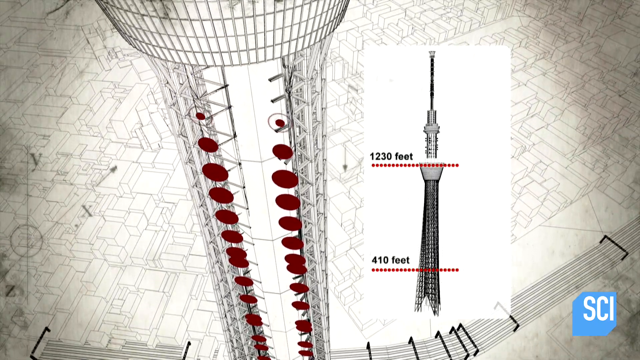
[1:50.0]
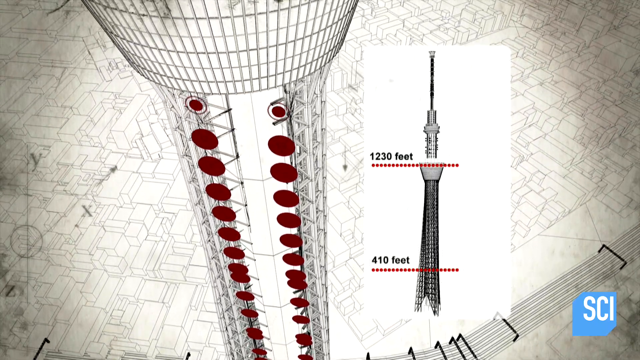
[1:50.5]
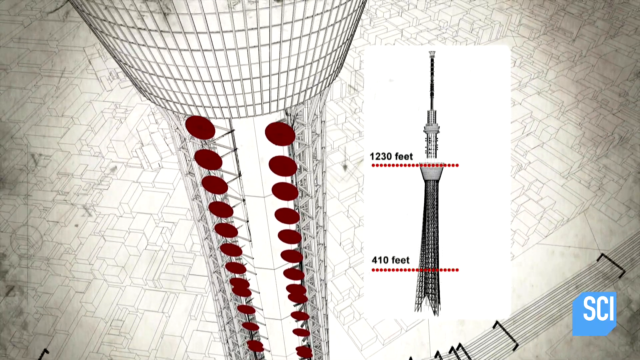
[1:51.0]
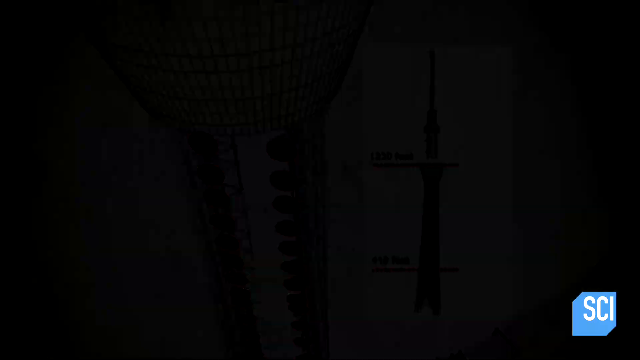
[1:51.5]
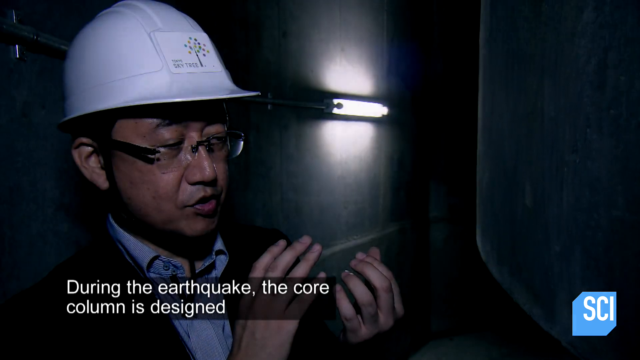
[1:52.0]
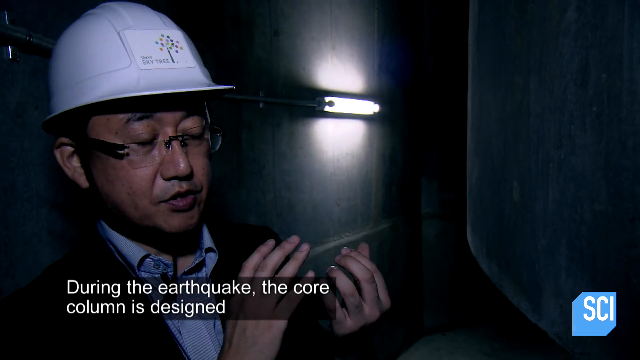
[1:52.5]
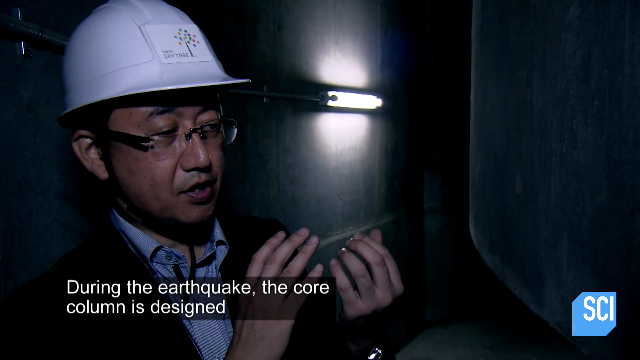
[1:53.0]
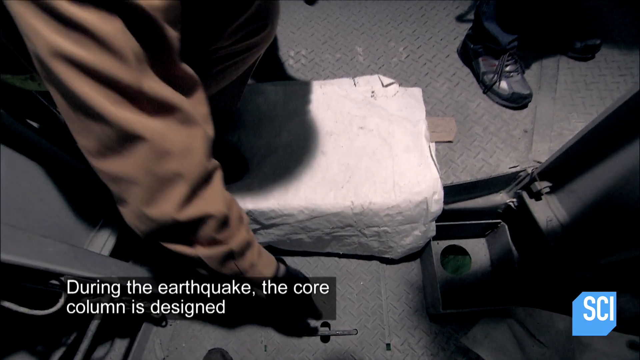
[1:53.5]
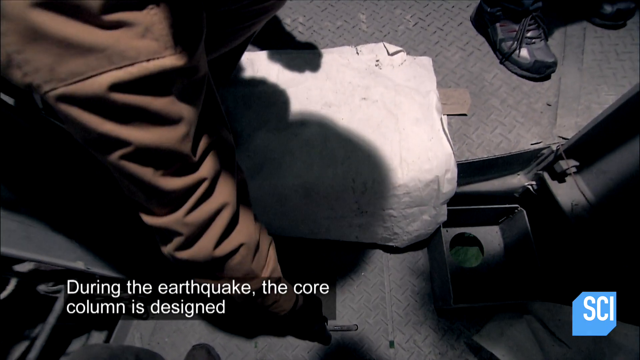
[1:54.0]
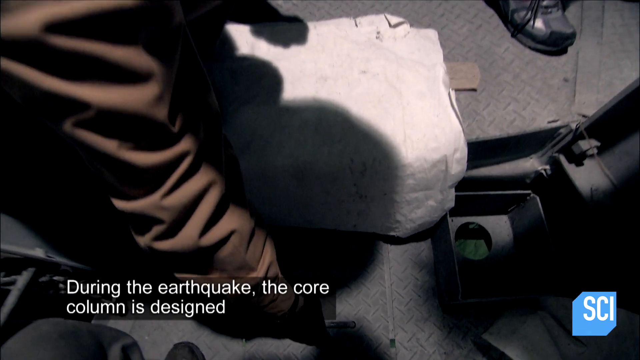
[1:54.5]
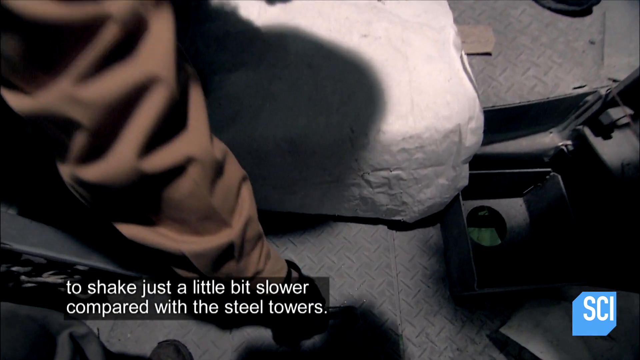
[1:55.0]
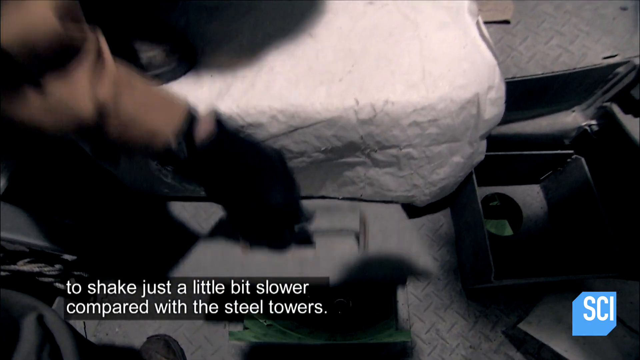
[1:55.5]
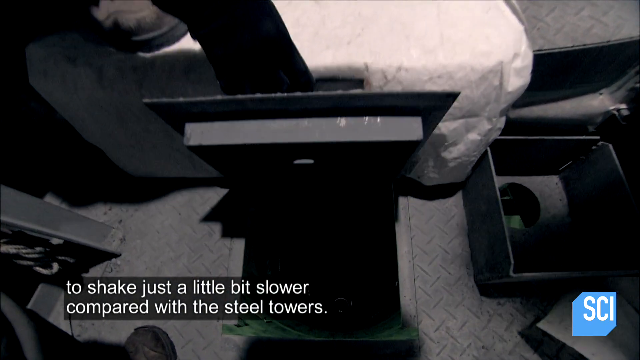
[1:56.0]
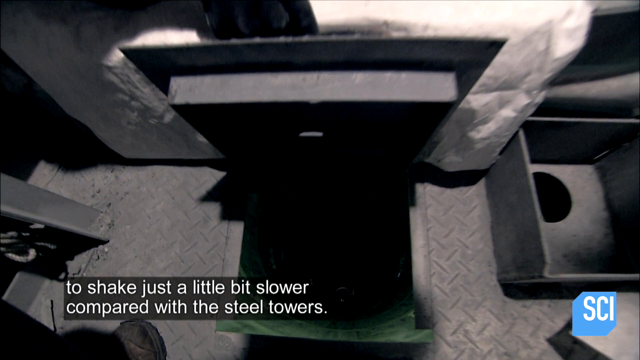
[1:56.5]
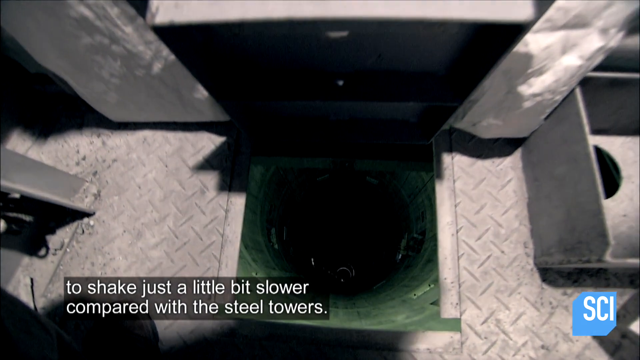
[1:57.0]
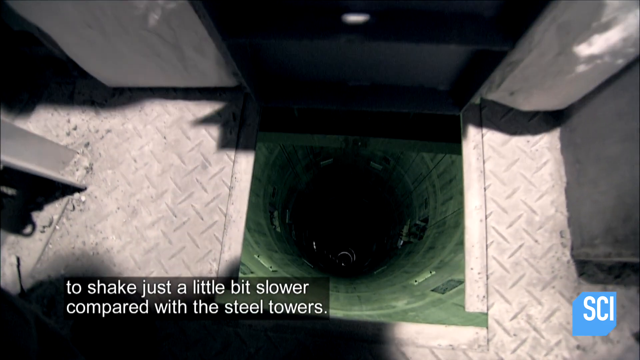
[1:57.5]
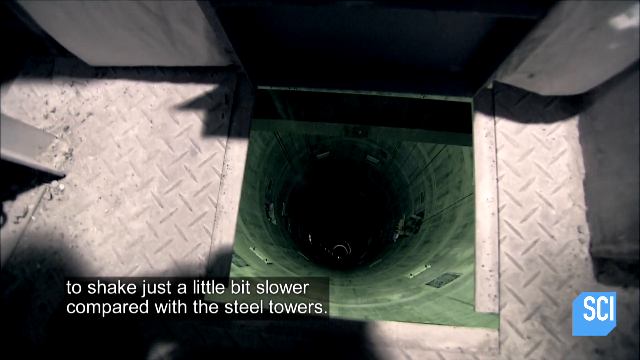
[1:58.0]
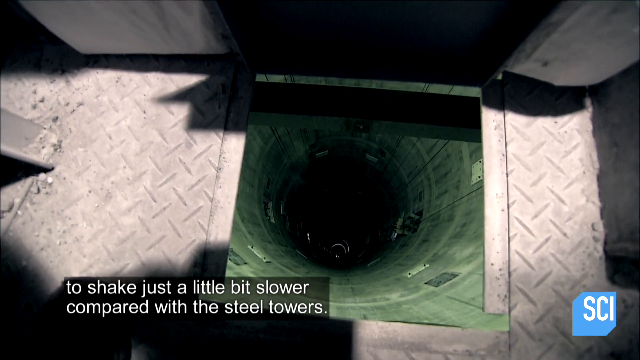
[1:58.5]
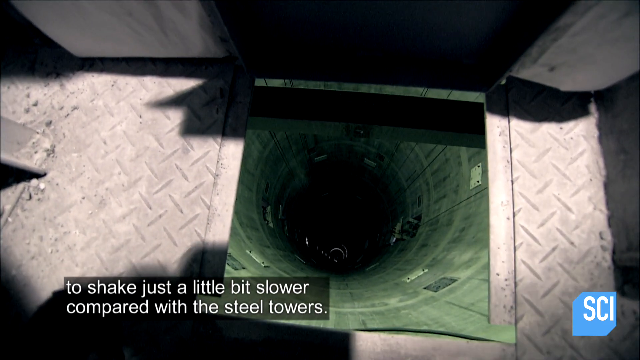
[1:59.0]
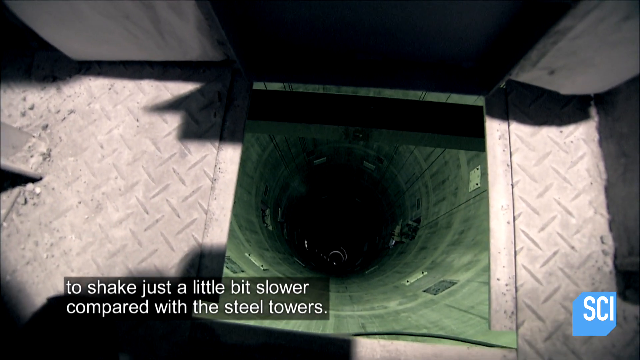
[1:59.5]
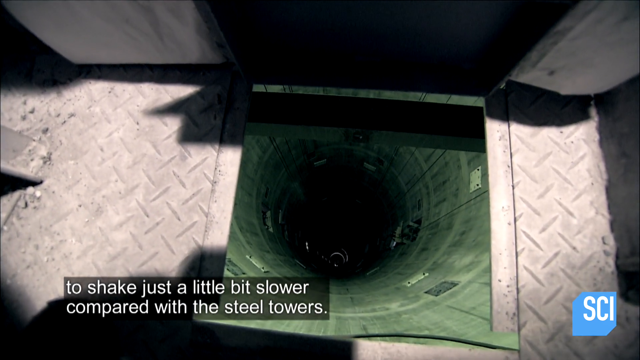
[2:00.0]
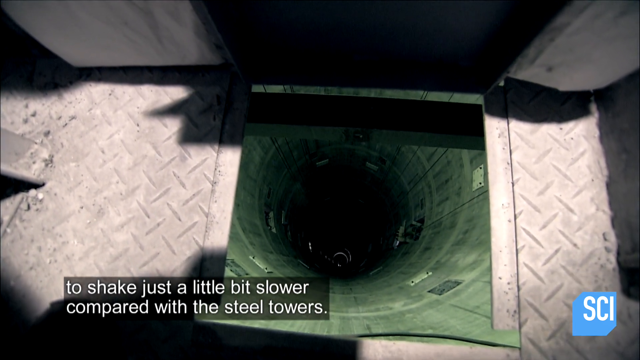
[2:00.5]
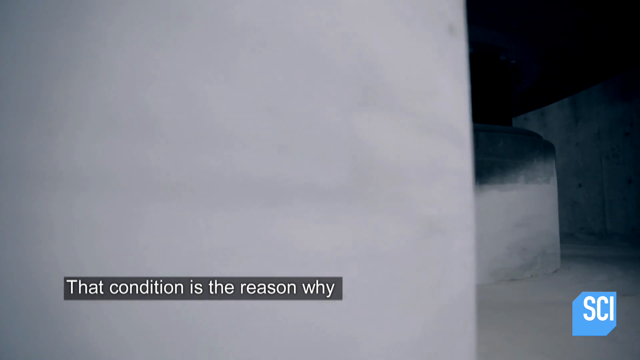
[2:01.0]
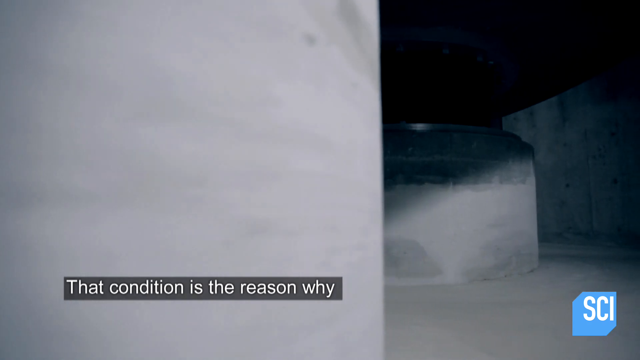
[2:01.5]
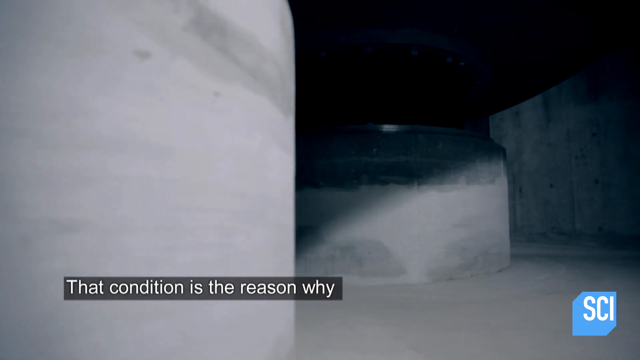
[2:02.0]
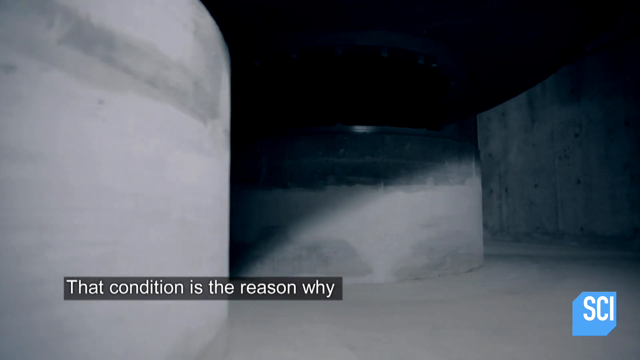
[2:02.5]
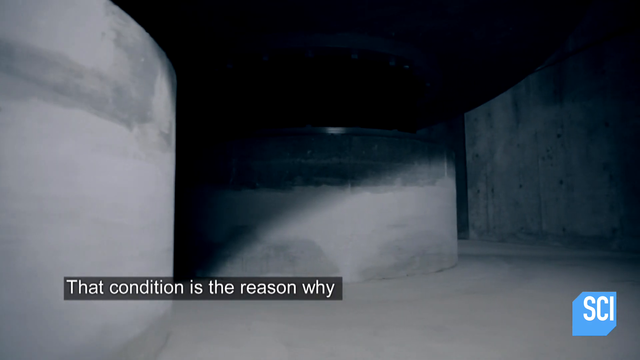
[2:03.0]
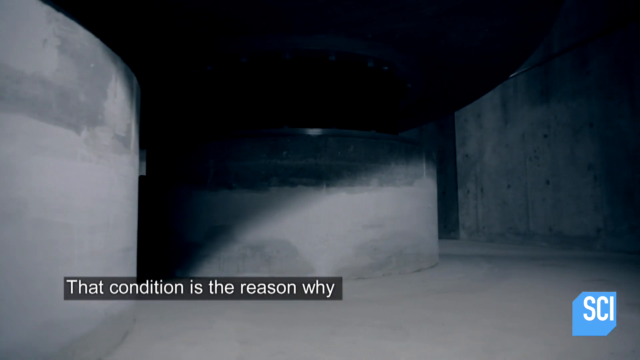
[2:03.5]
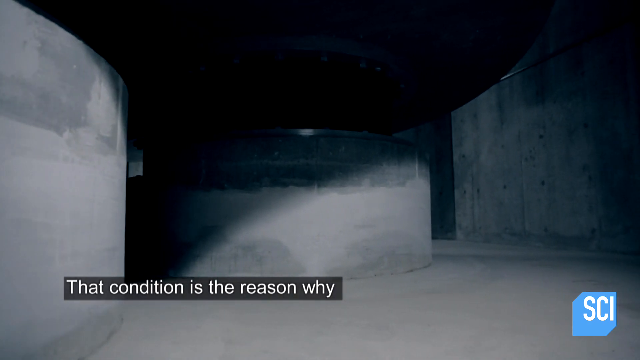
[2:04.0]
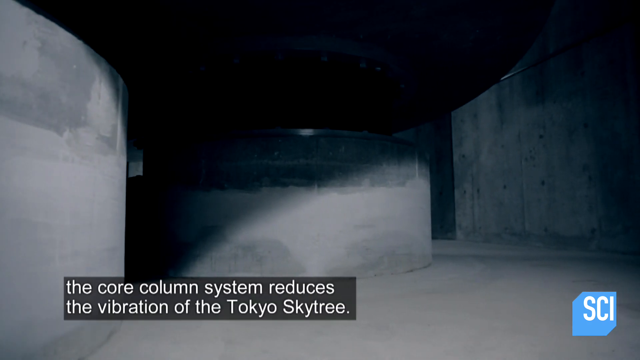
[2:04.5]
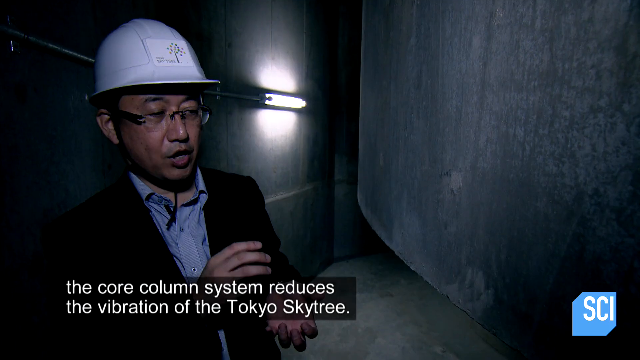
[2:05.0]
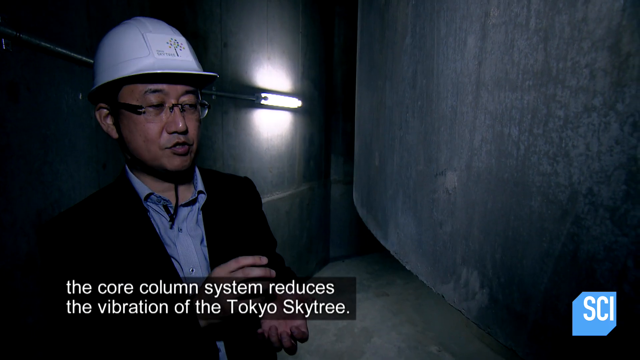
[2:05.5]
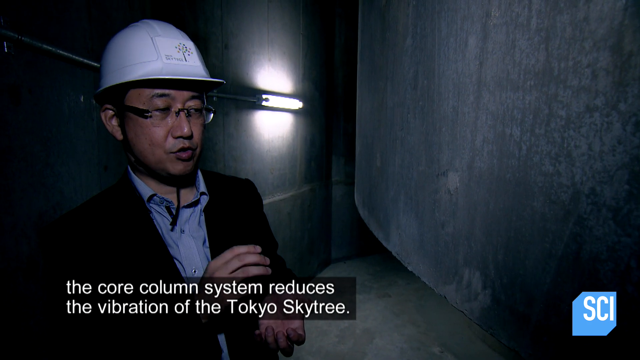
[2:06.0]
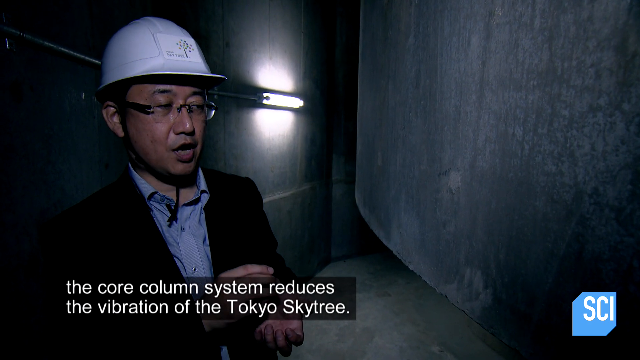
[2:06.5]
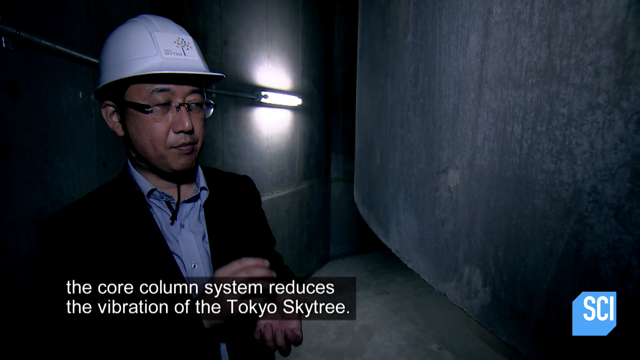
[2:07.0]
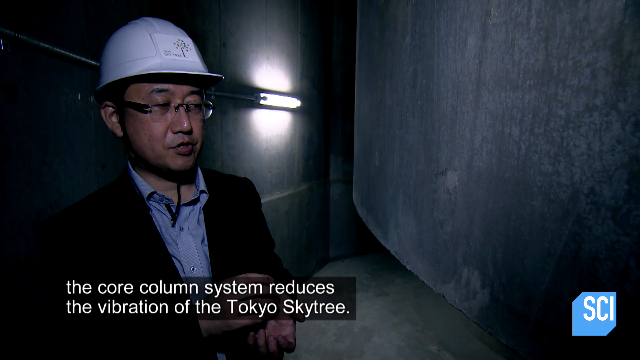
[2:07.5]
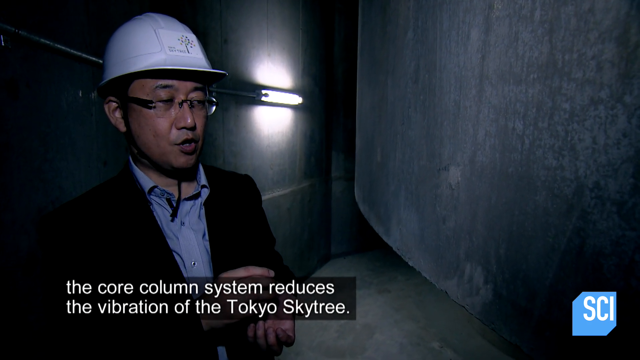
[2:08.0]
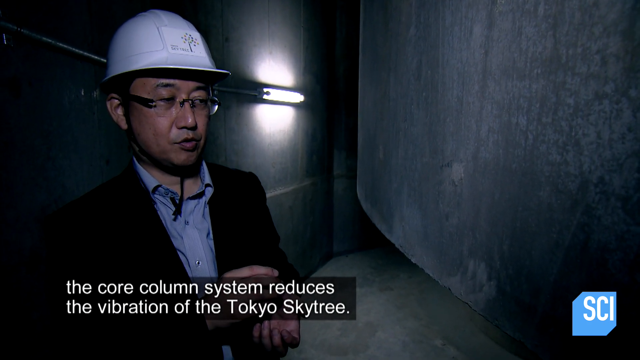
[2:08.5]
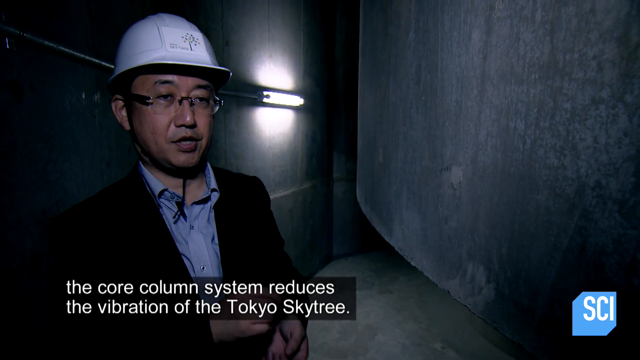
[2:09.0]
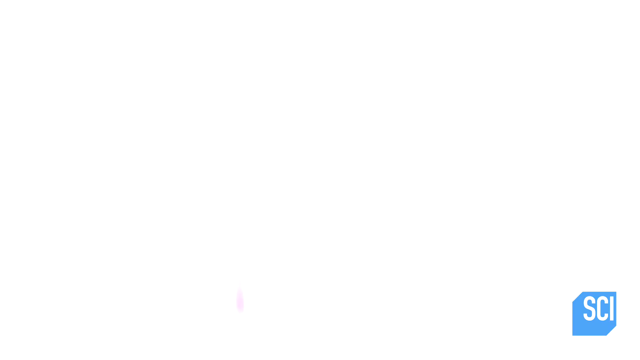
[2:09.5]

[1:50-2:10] The very top of the structure is shown, and the engineer appears talking. The view shows the inside of the structure and underneath it.